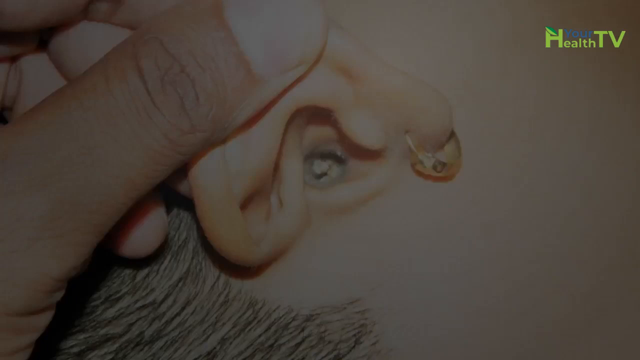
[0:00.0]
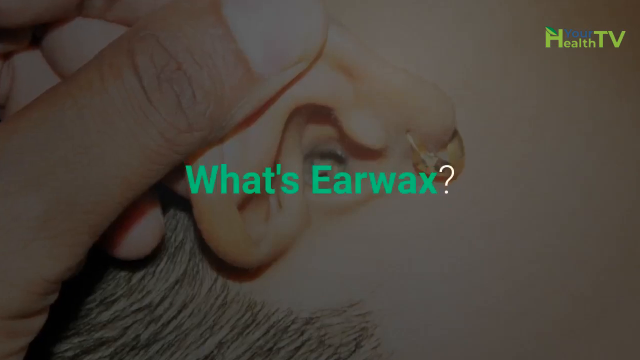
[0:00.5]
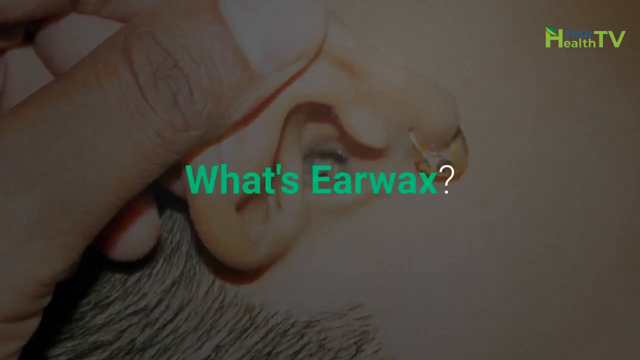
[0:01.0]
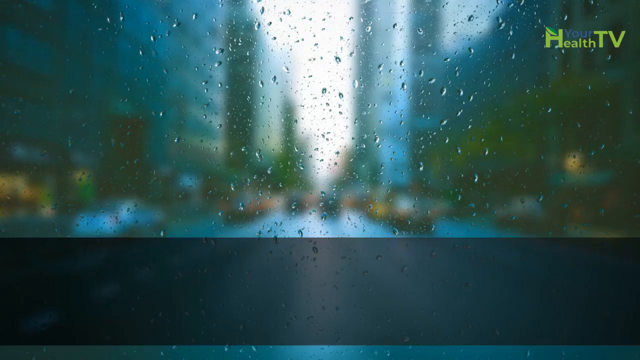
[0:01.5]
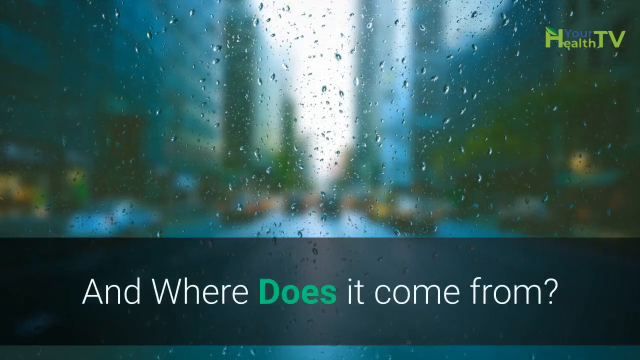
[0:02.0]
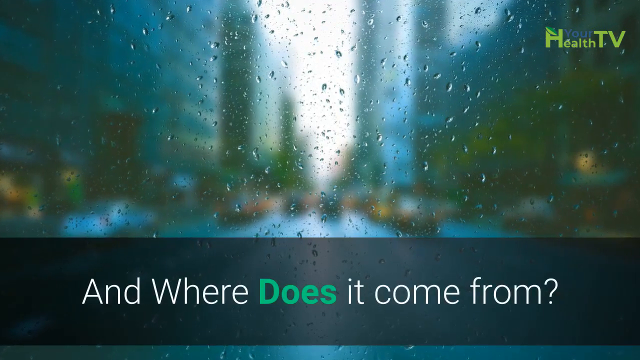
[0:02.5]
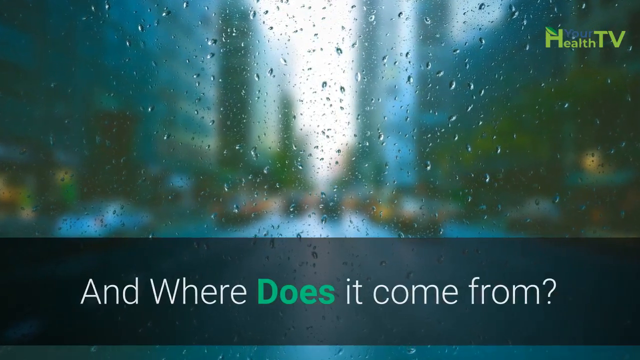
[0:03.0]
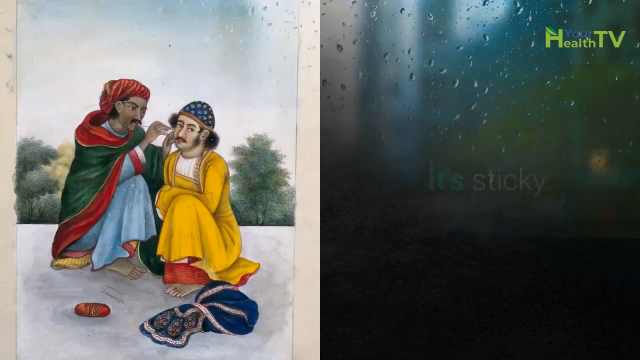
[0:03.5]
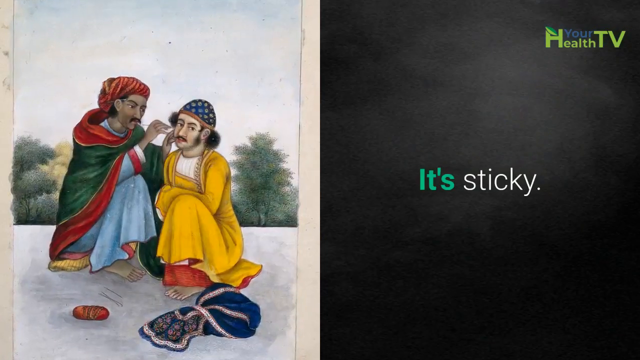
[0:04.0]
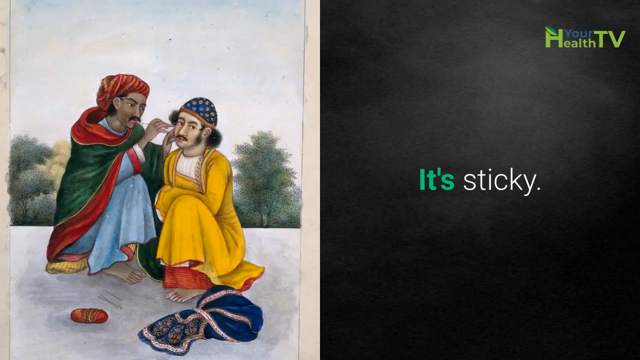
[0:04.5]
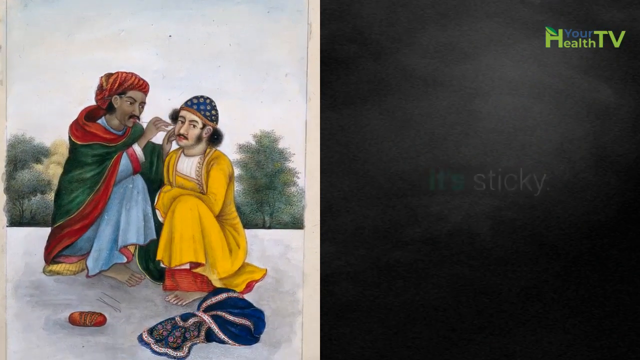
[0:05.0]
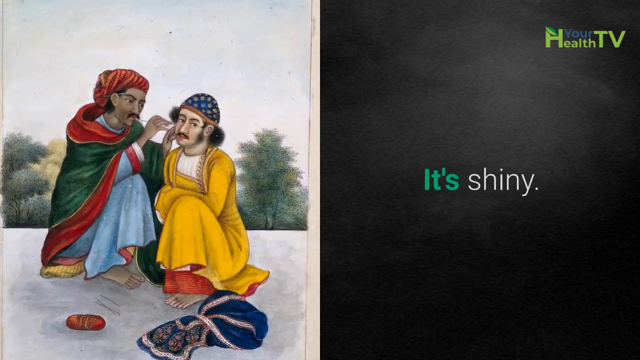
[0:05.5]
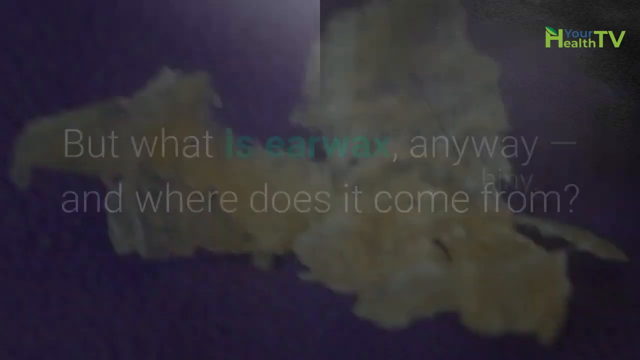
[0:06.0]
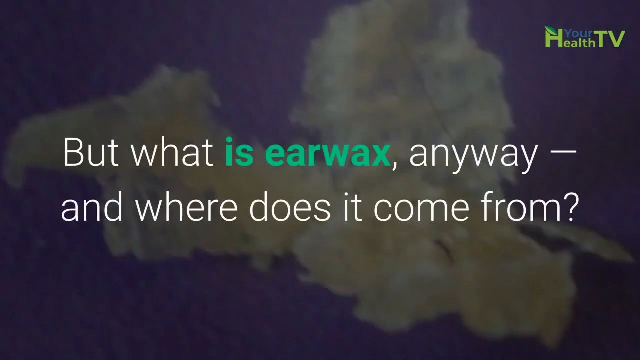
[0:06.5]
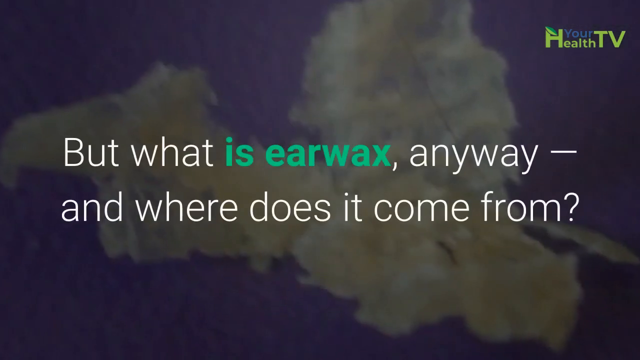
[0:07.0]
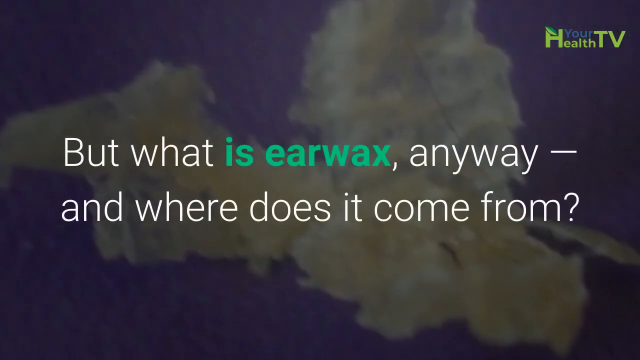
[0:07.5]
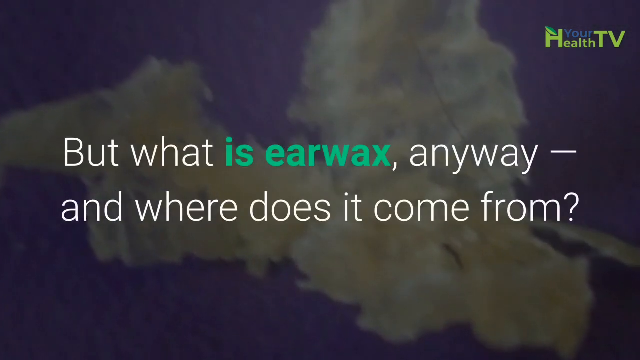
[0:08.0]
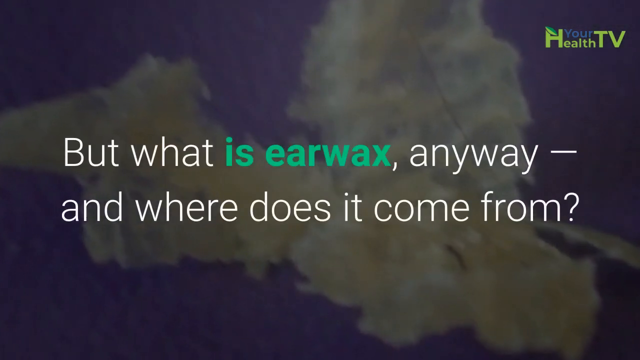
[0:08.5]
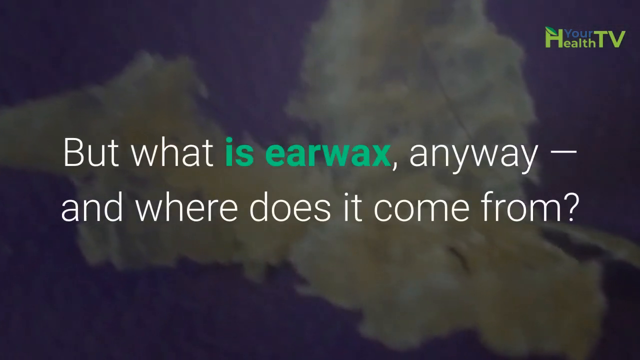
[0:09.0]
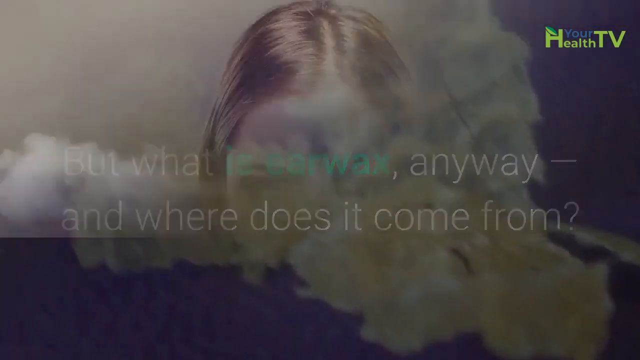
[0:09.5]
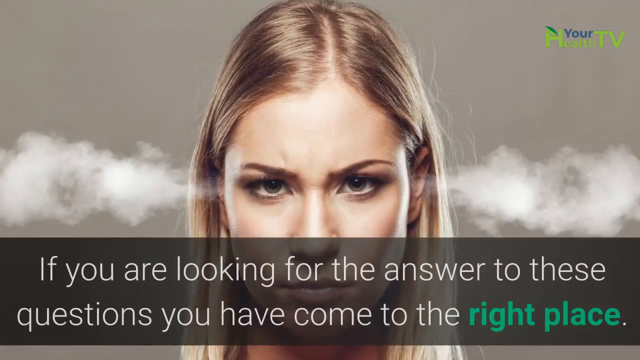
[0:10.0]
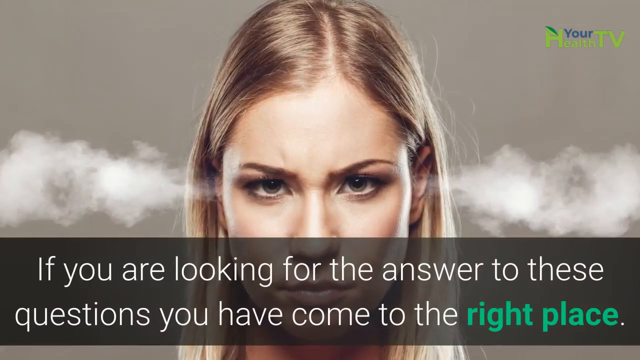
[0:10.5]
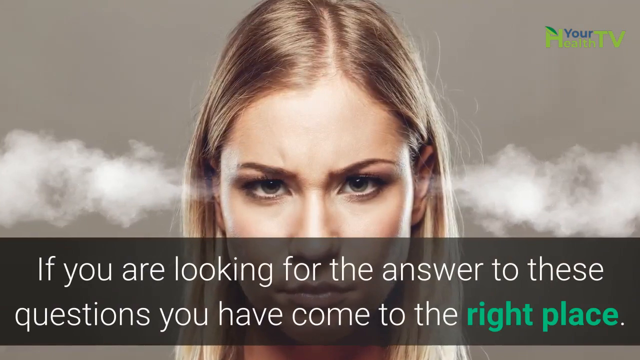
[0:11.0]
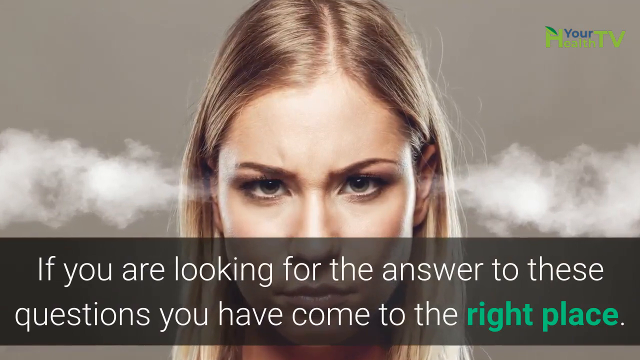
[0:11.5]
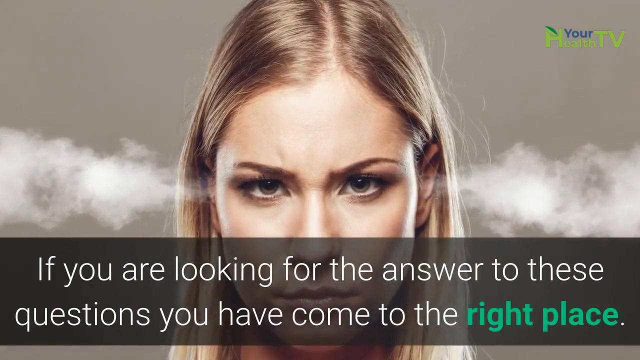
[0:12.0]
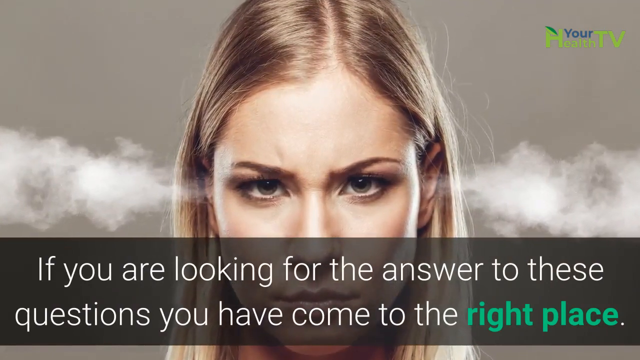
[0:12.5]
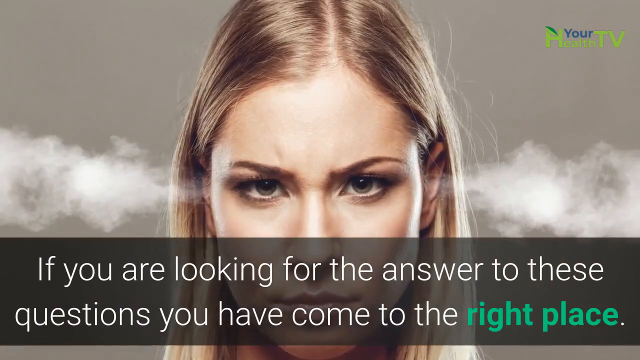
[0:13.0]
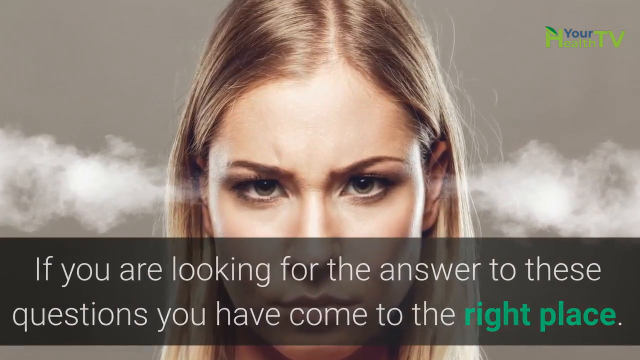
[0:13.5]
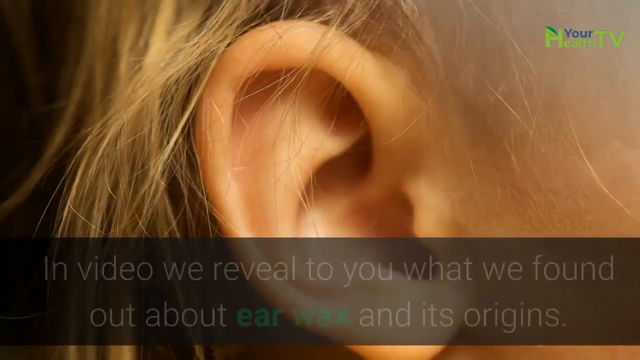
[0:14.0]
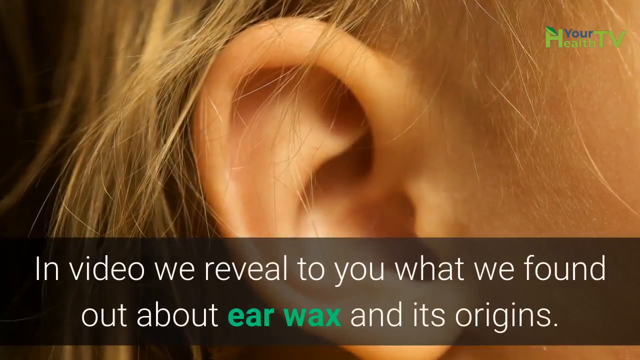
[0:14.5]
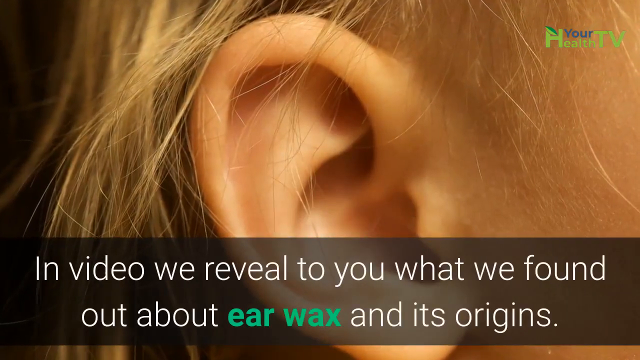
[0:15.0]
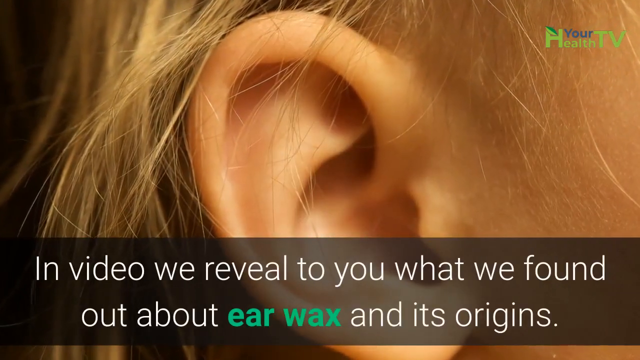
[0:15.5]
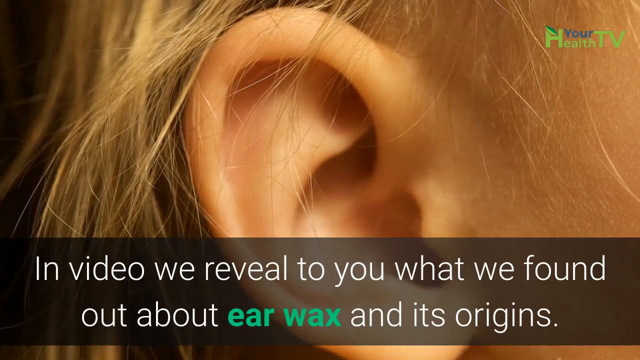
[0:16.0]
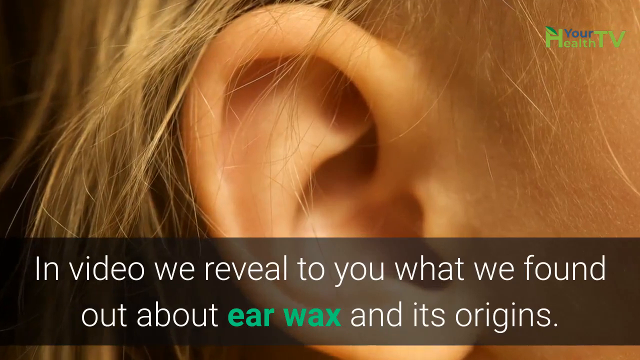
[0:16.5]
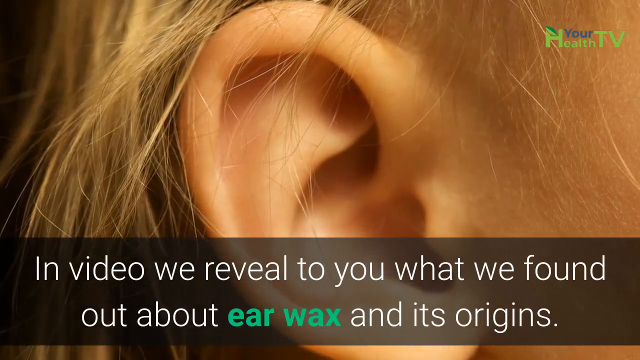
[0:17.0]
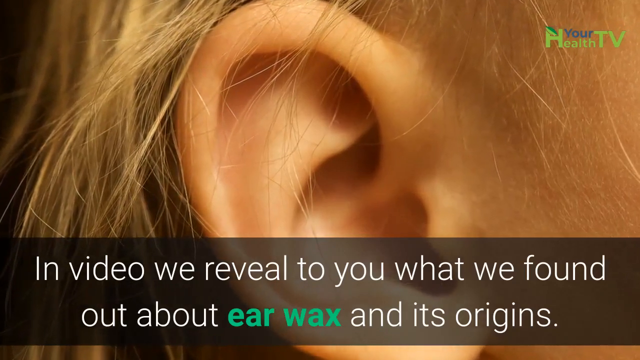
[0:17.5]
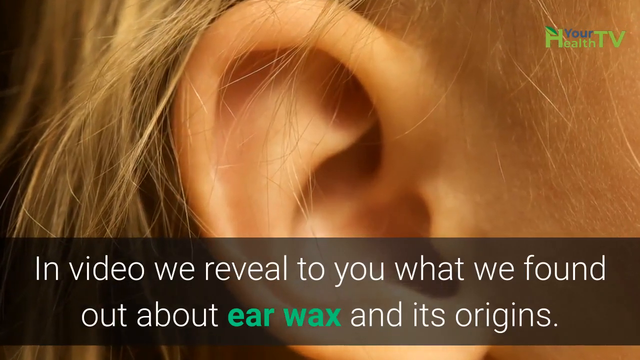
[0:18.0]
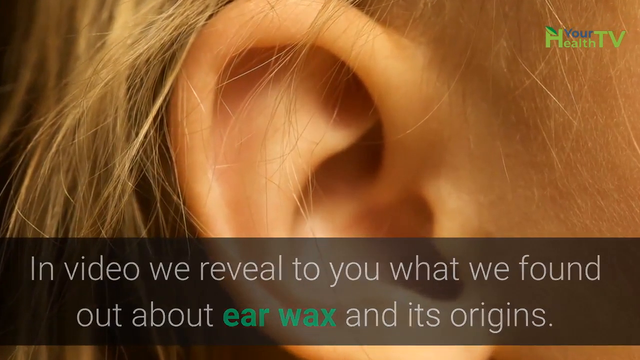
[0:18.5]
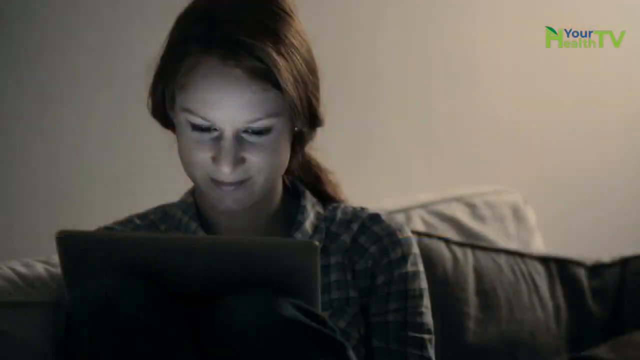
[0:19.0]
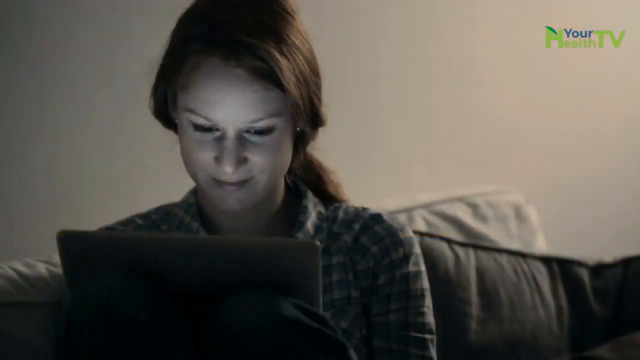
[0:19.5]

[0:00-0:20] In the upper right-hand corner is a logo for Your Health TV, and in the center of the screen green writing with a white question mark reads "What ear wax?" A Caucasian-appearing person's ear is shown; they wear an earring and have something in the center of their ear, and a brown-skinned person holds onto their earlobe. The next scene looks like a photograph taken through the windshield of a vehicle traveling down a city street on a rainy day. It is kind of blurry, as if there is condensation on the window, and there are a few raindrops on the outside; other vehicles are visible in front. More text reads "where does it come from". Next, on the left, is an older drawing or illustration of two men who look to be from a Middle Eastern culture. The man on the right wears a blue tunic with a red and green cape and a red head covering, and he appears to be removing debris from the ear of another man, who wears a yellow tunic and a blue and green covering on his head. Near their feet there appear to be tools being used to get the wax out of the ear, and there are trees in the background of the illustration. On the right-hand side, text reads "it's sticky" and "it's shiny". More text, over a background image that looks like a page of an atlas or a globe, reads "what is earwax anyway and where does it come from?" The next image shows a Caucasian woman with blonde hair parted just off-center and green eyes; steam comes out of her ears and she looks angry. Text reads "if you can look for the answers to these questions, you've come to the right place." Then there is a close-up of someone's ear, apparently a Caucasian person's, with blonde hair along the ear; their age and gender cannot be told because only the ear is visible. Text reads "we reveal to you what we found out about earwax and its origins."